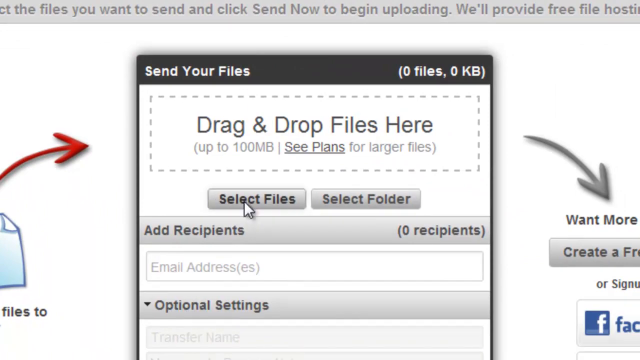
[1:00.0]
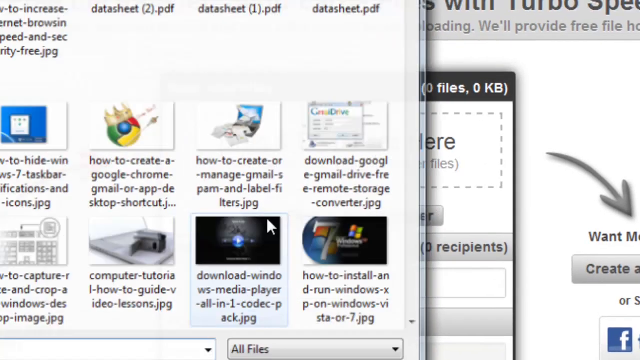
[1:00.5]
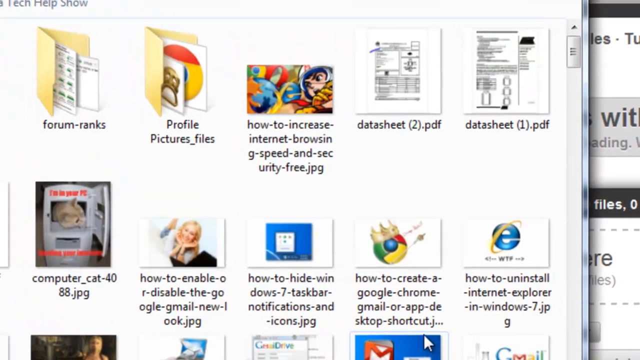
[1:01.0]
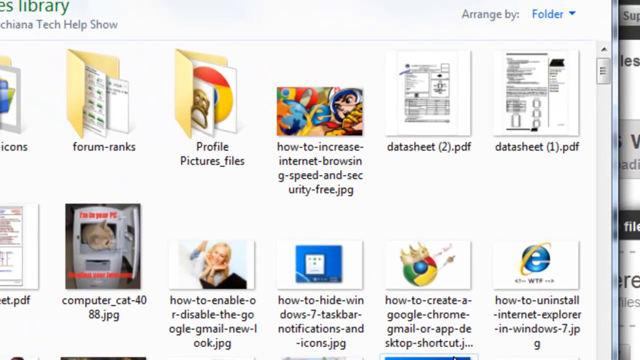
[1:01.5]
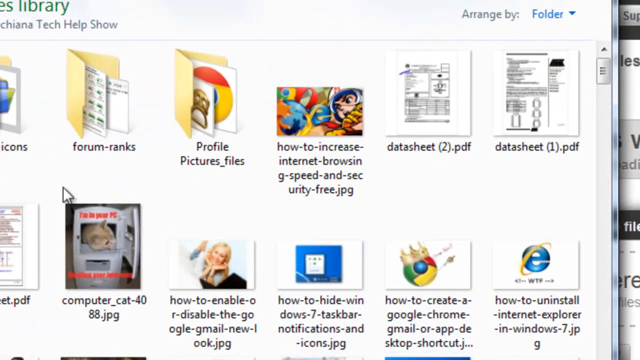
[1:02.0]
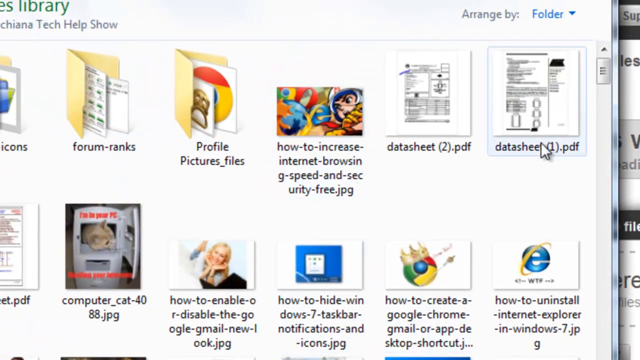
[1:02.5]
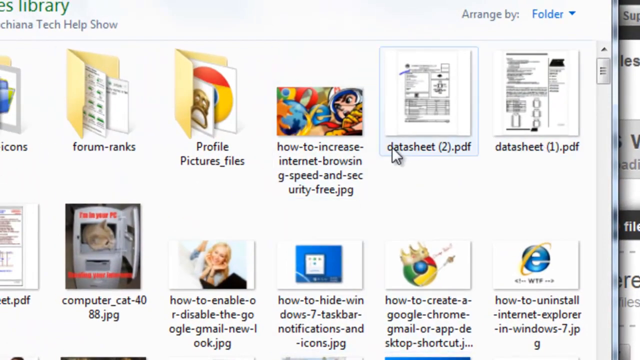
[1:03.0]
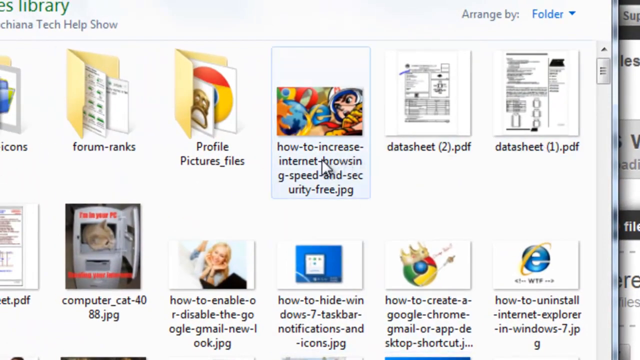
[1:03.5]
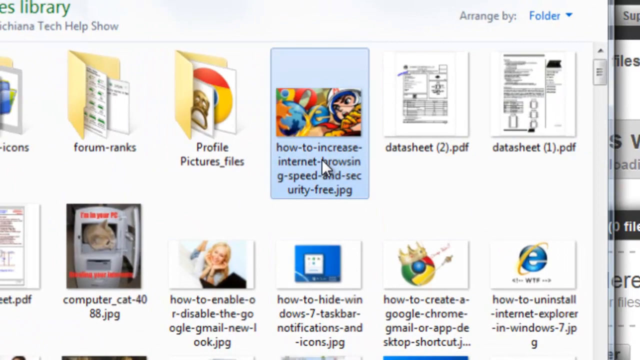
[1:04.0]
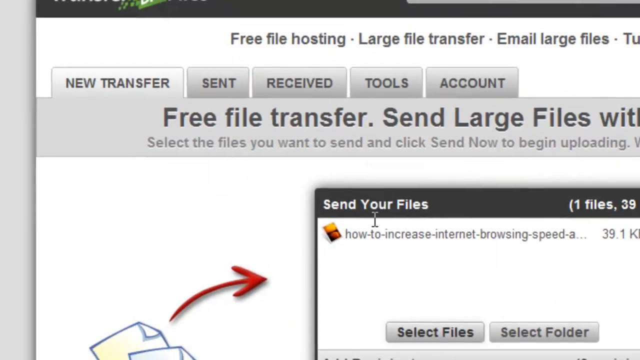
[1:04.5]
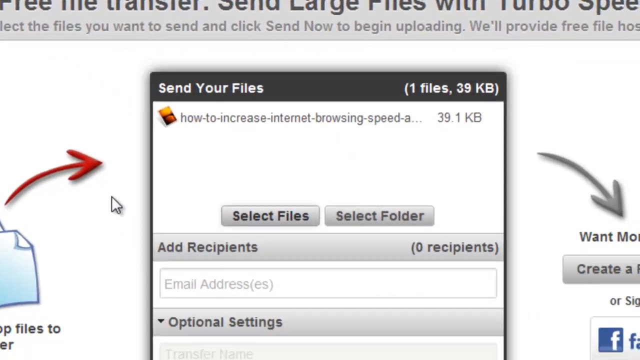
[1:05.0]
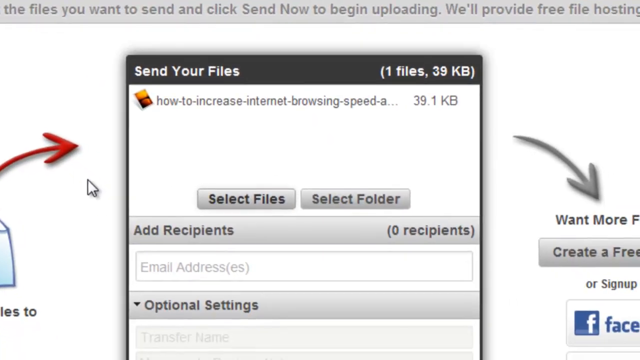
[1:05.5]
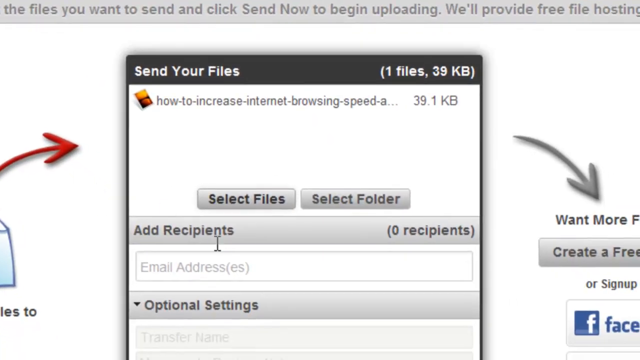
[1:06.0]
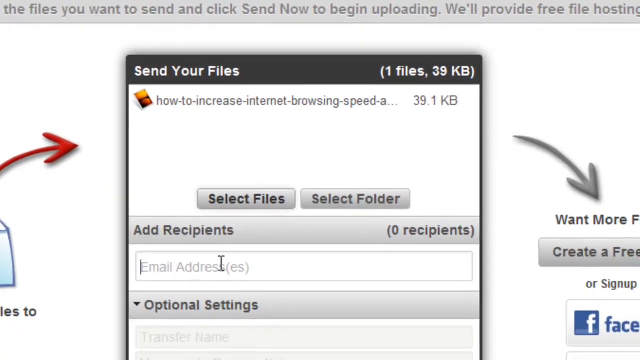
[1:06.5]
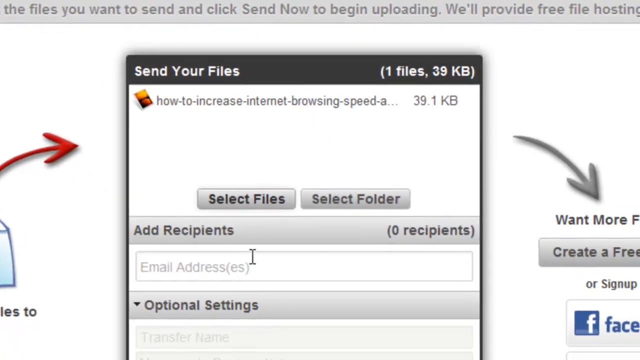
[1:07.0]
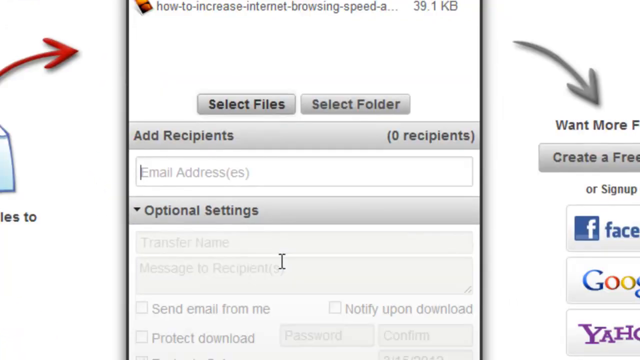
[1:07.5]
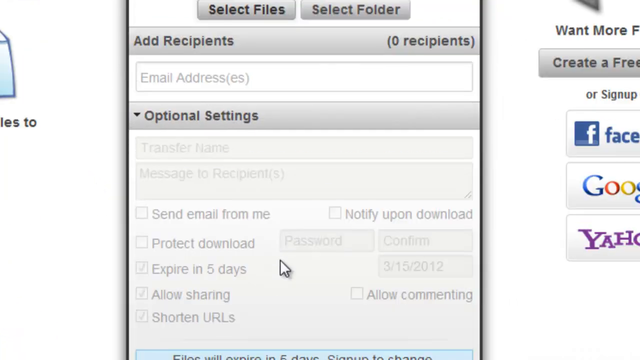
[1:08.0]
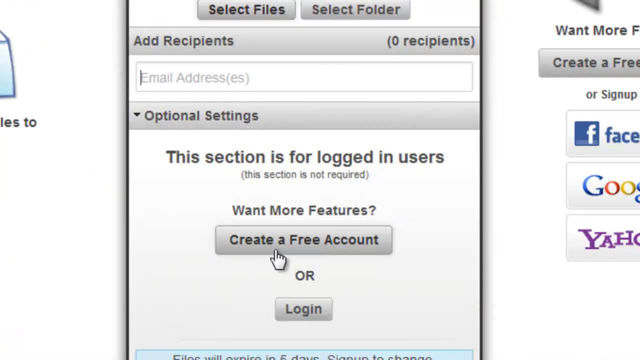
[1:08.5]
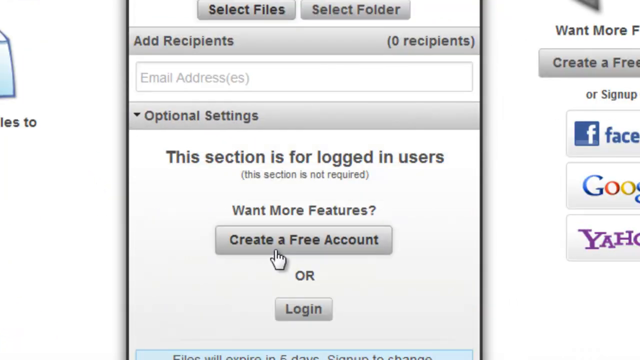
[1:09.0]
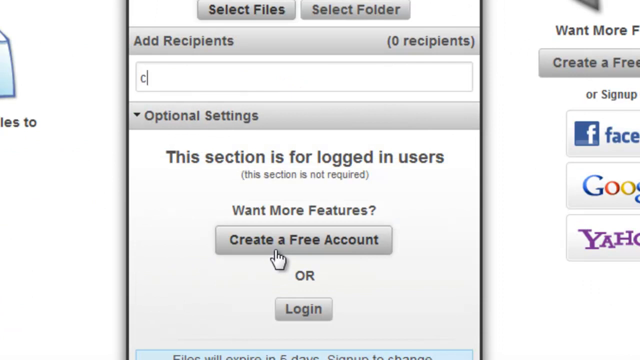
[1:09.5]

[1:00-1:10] A folder with lots of different files opens. The cursor first hovers over the file on the right-hand side, then moves to the centre file and selects it; as it is selected, the border around it turns pale blue. The selected file is "how to increase internet browsing speed". The view returns to the initial box, where the Add Recipients field is white with pale grey email address text inside. As typing begins, the text turns black, and "craig" is typed in lowercase letters.